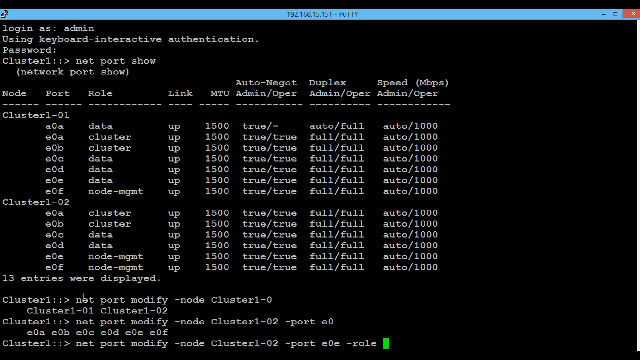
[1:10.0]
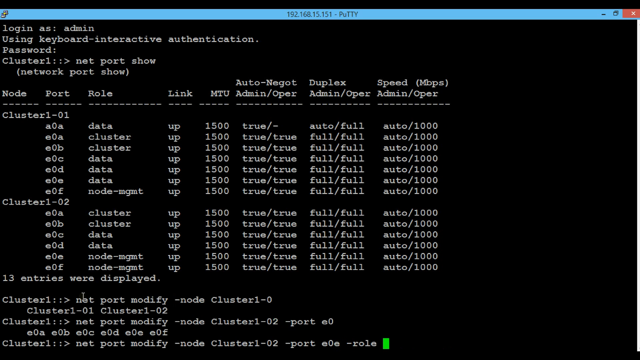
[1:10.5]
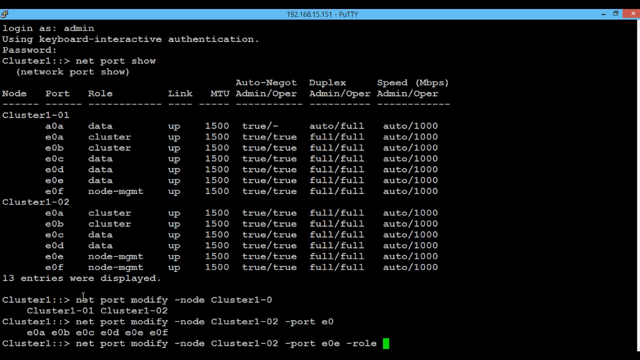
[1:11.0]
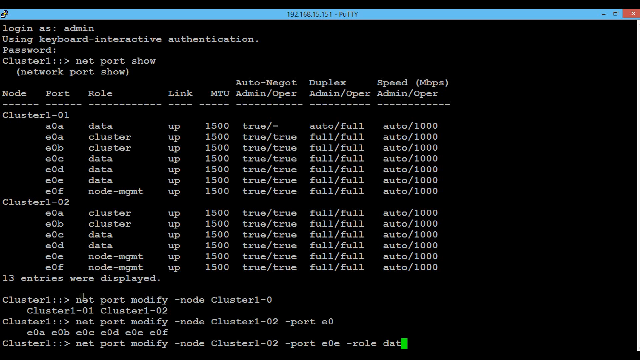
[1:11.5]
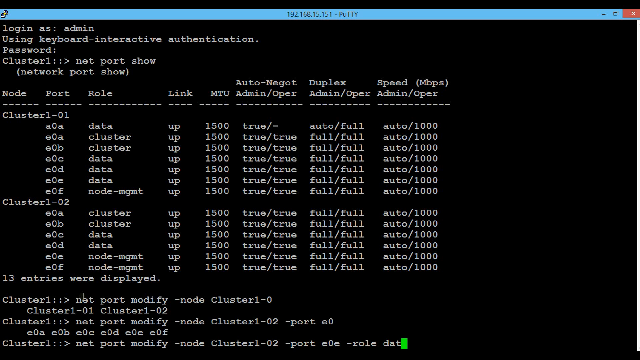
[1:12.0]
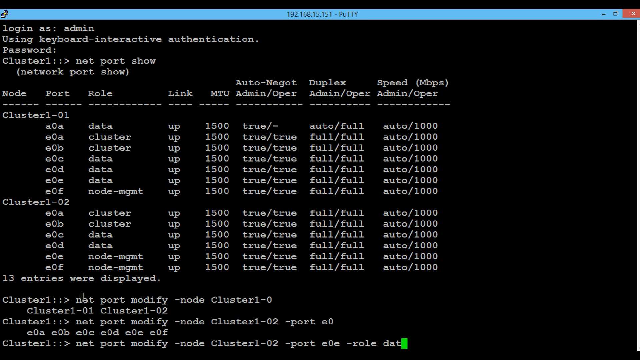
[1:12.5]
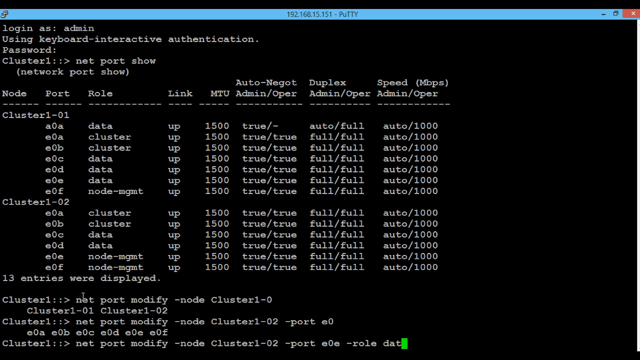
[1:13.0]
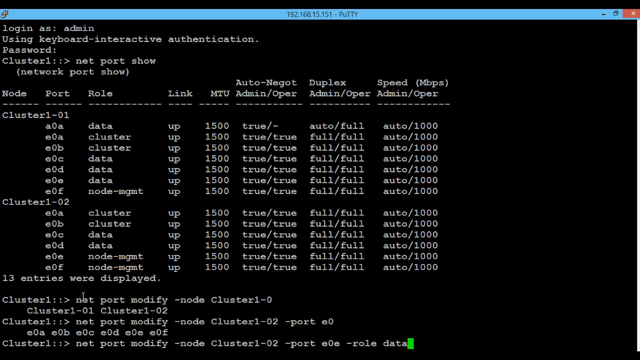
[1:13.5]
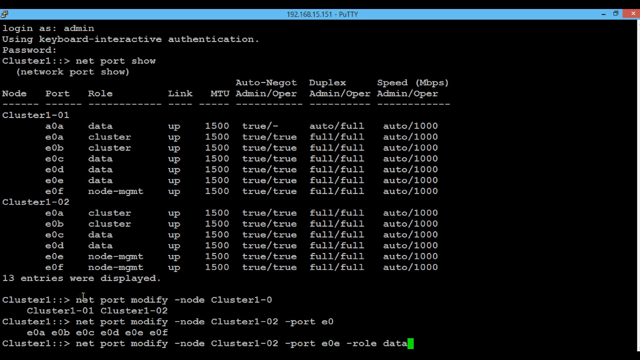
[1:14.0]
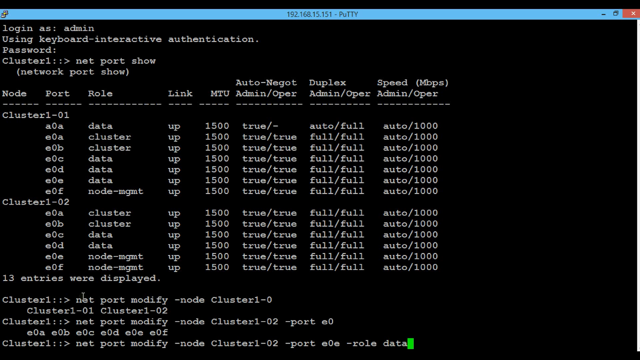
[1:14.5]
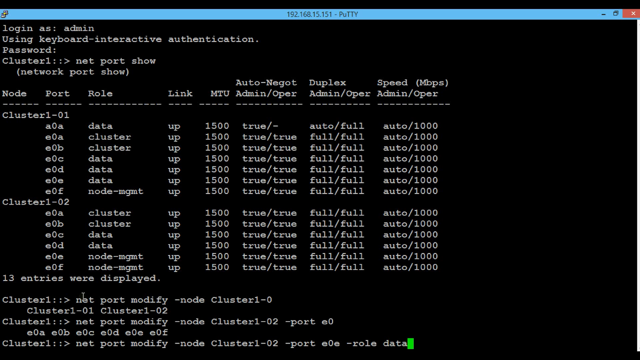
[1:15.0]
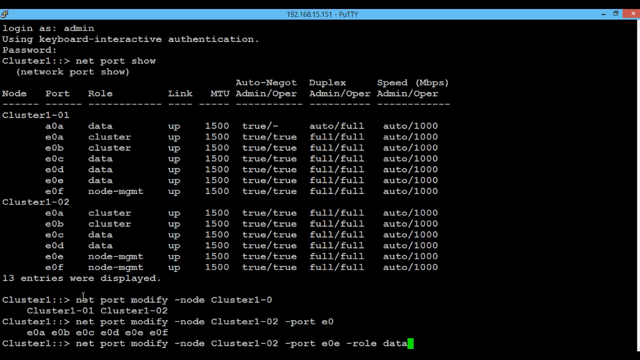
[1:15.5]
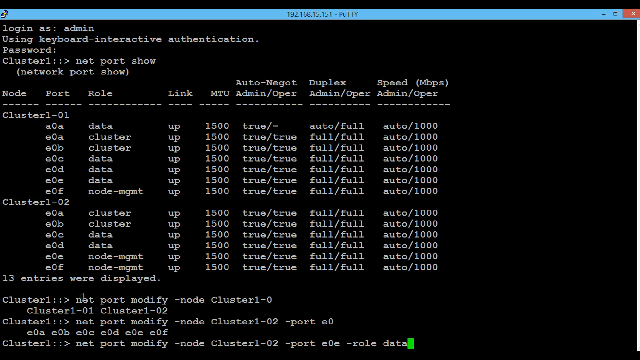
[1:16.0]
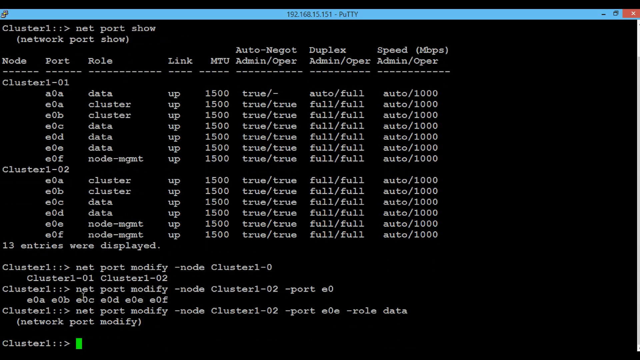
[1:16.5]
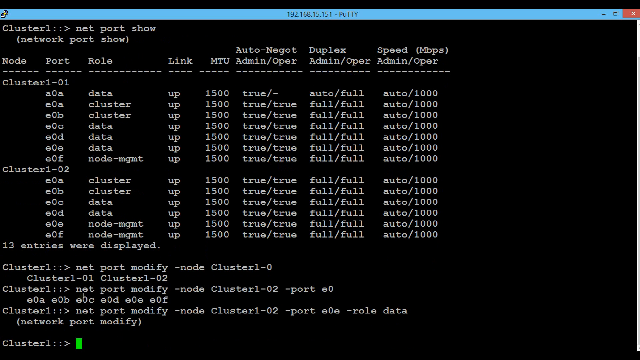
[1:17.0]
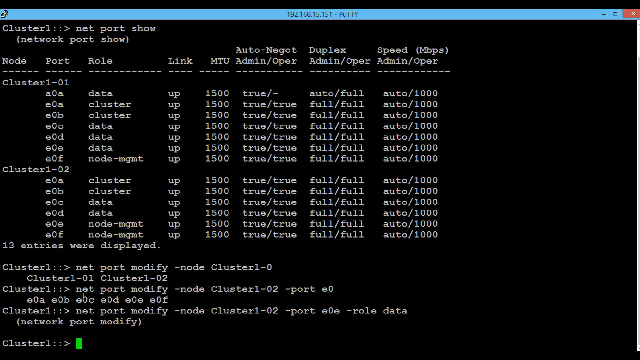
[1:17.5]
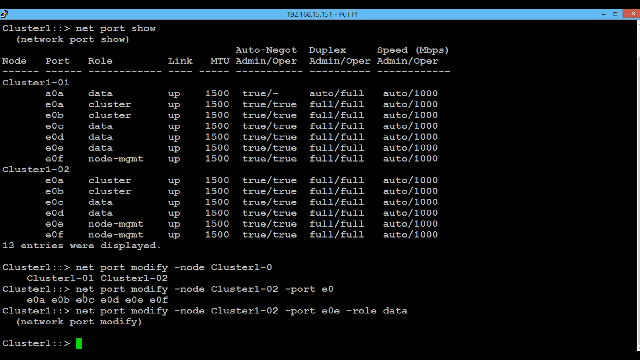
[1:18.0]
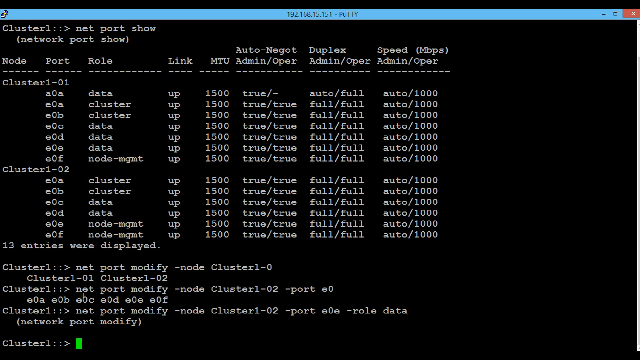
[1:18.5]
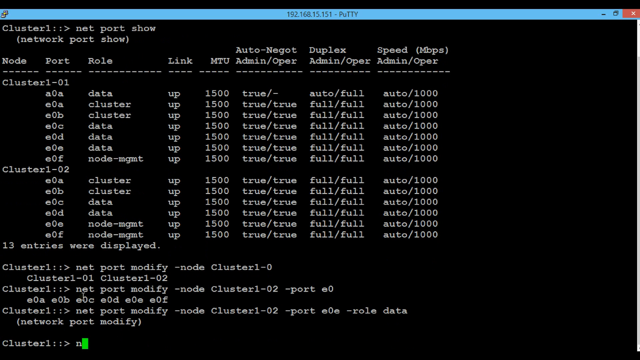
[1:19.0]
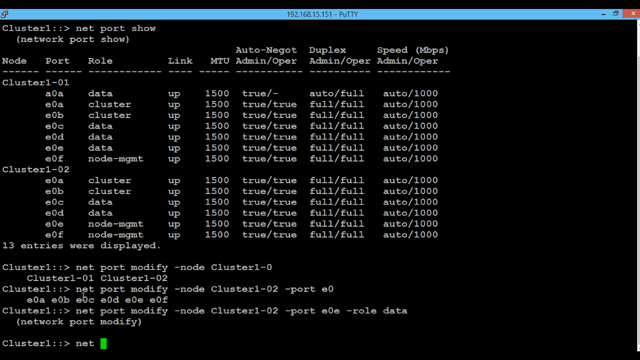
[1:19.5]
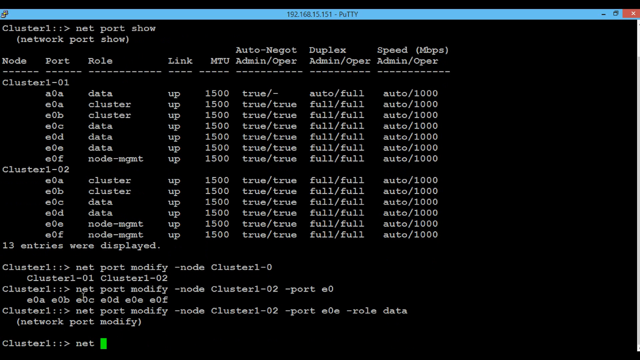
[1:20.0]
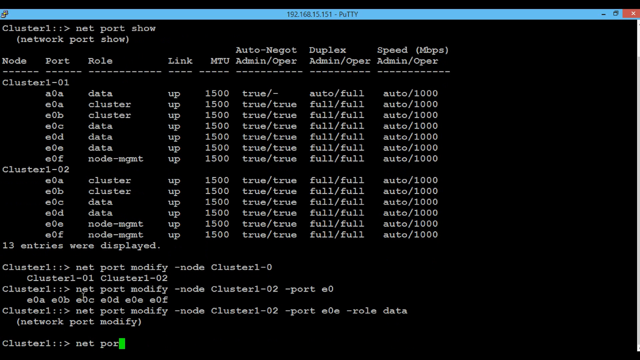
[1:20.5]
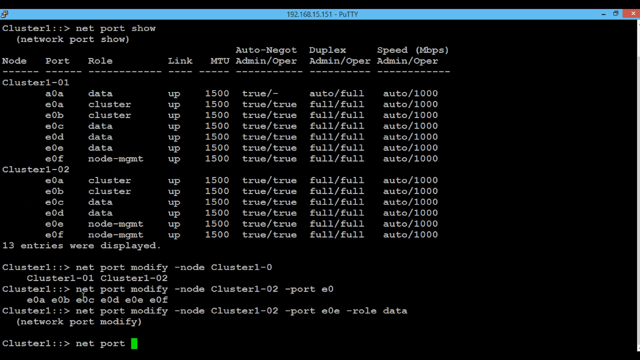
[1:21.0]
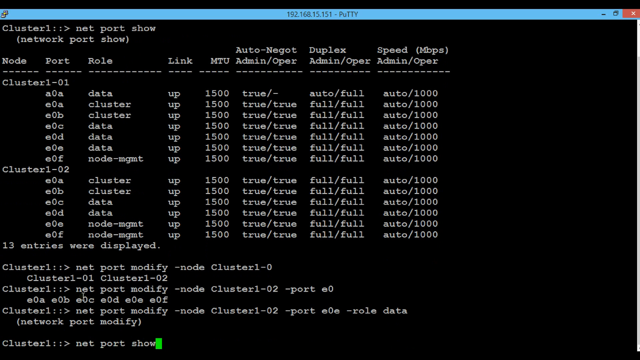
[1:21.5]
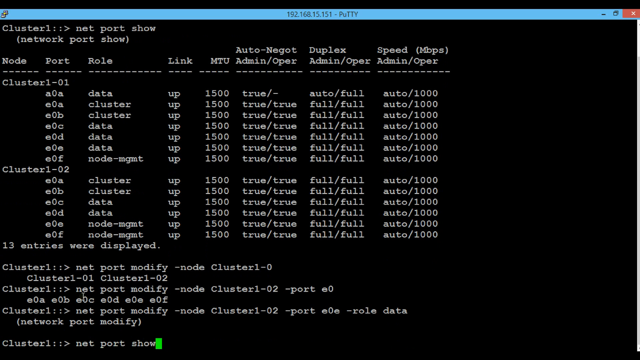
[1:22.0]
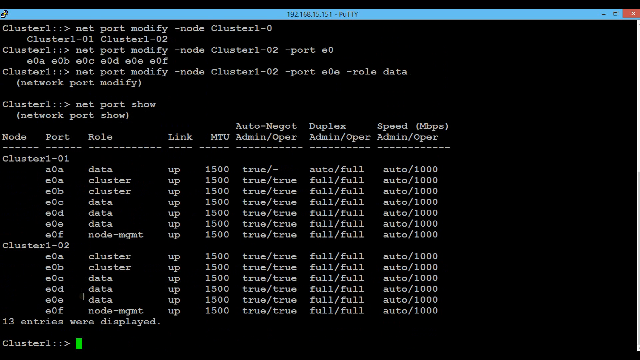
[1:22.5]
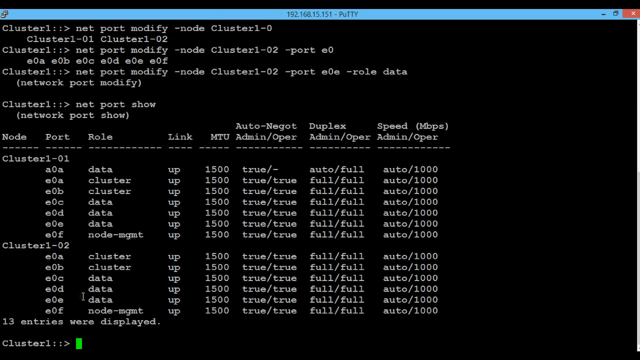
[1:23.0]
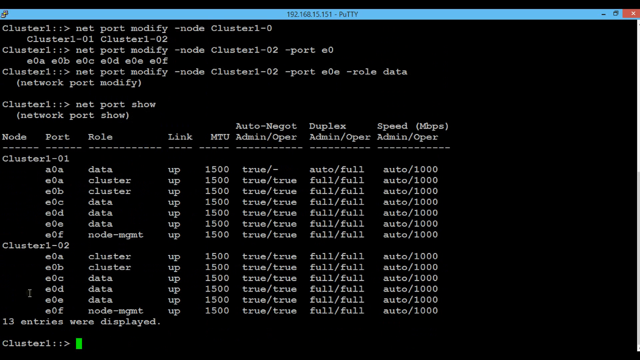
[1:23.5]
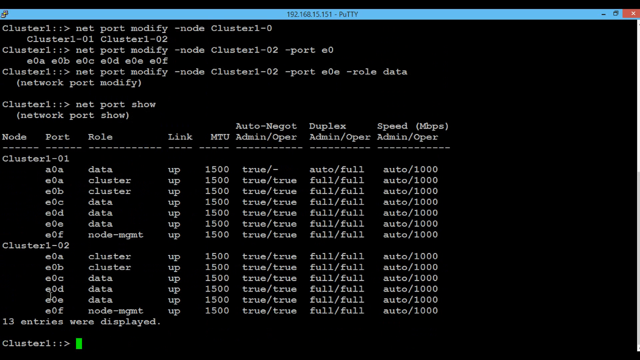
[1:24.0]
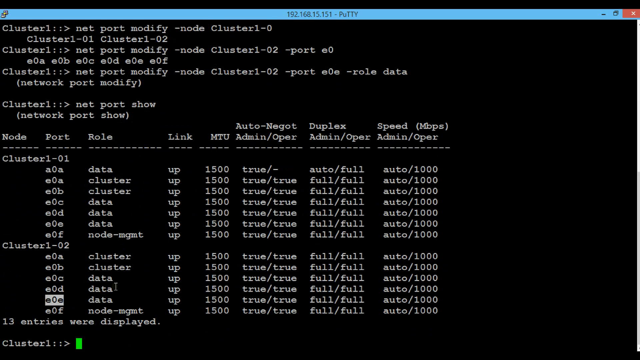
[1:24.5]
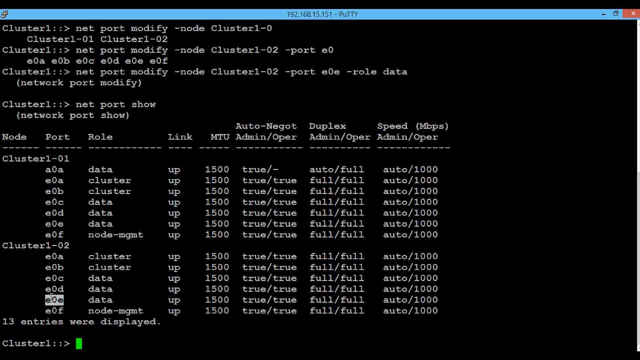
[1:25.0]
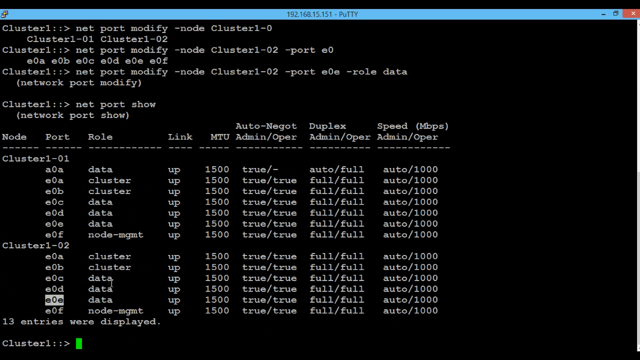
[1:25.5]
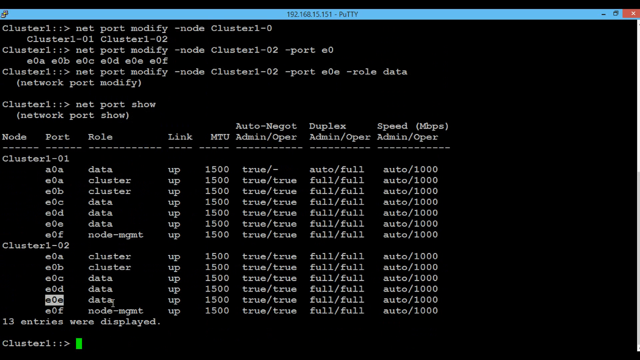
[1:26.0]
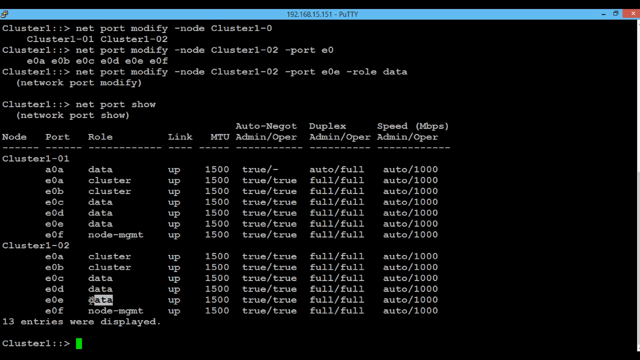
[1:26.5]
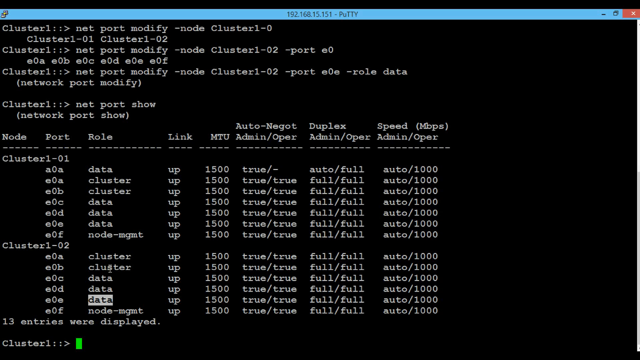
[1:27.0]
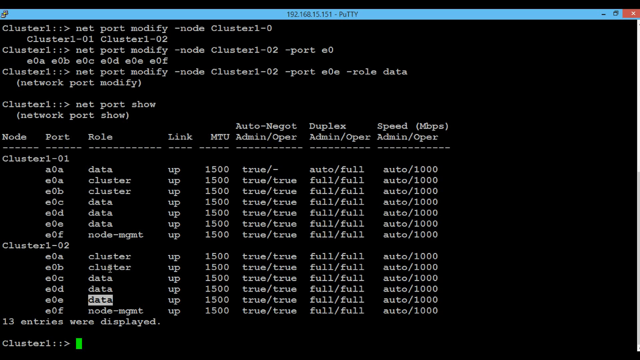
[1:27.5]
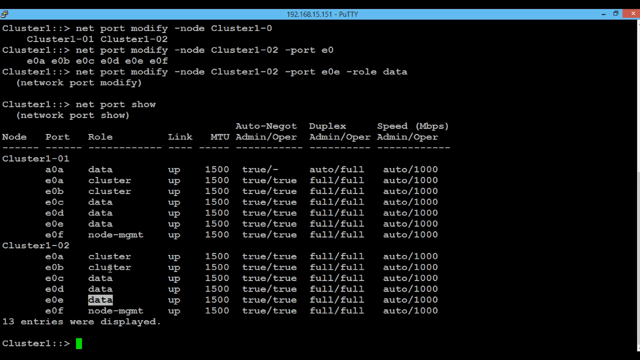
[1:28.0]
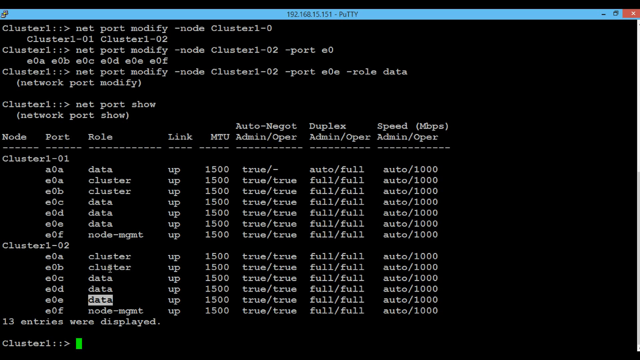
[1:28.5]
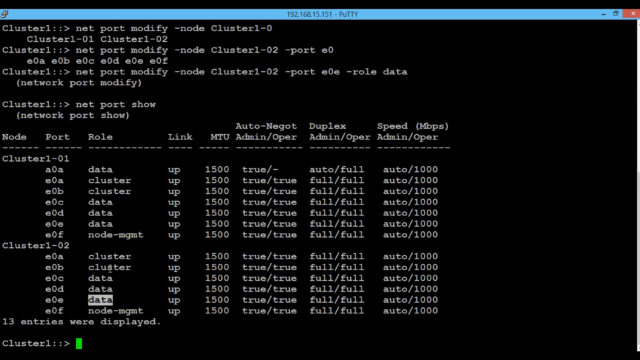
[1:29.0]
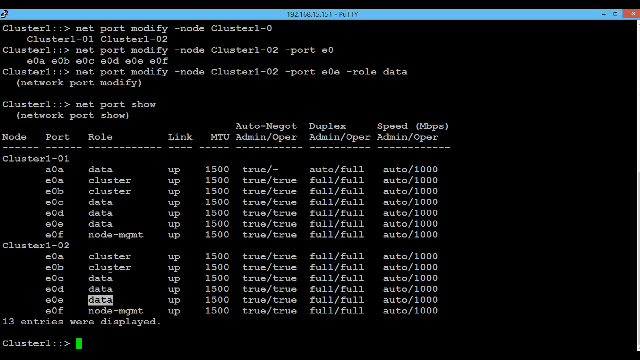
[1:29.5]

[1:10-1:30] The same command prompt text is written over a black screen on what appears to be a computer monitor. Several cluster commands are typed in, the text reading "cluster::> net port show", followed by many data points in about seven individual columns. Underneath, the net port modify command appears. Port role data is being input in a network port modify request, and then the menu appears to repost. The mouse cursor highlights different data points within the columns. At the top it says it is using "keyboard-interactive authentication", and beneath that is "password:" with the field blank. Then comes "cluster1::> net port show" with "(network port show)" underneath, and columns for mode, port, role, link, MTU, auto negotiation, admin operation, duplex administration operation, speed in megabits per second, administrator, and operator. The first cluster says "auto" and "/1000" under speed, and the second cluster shows the same.